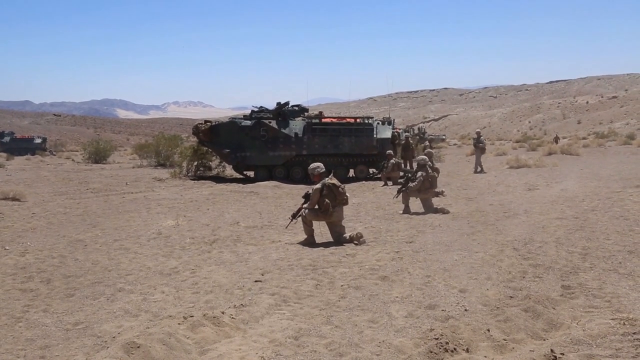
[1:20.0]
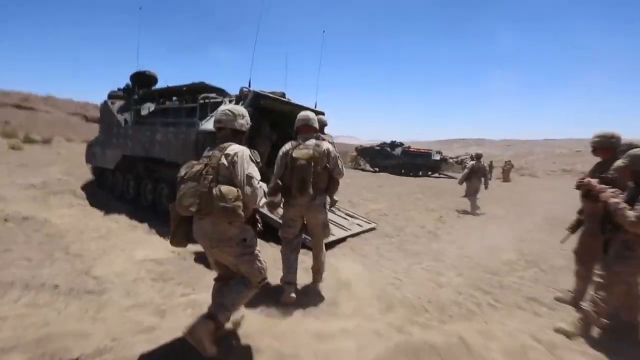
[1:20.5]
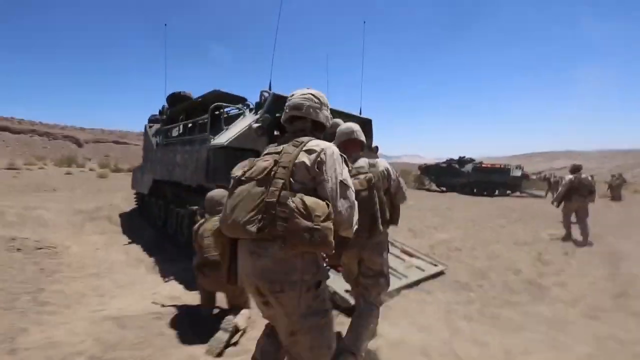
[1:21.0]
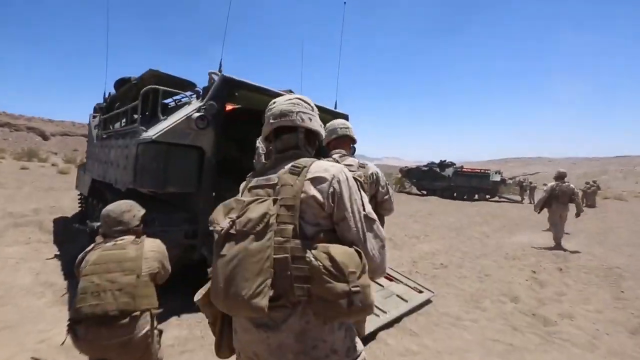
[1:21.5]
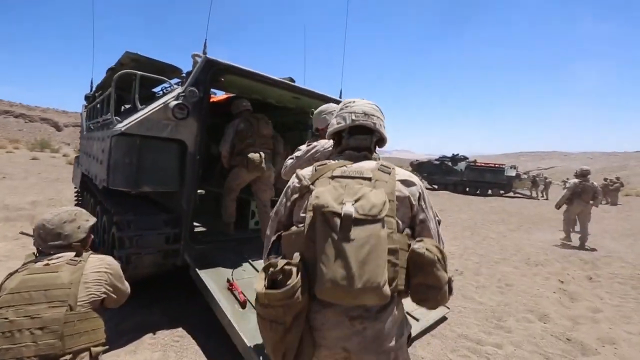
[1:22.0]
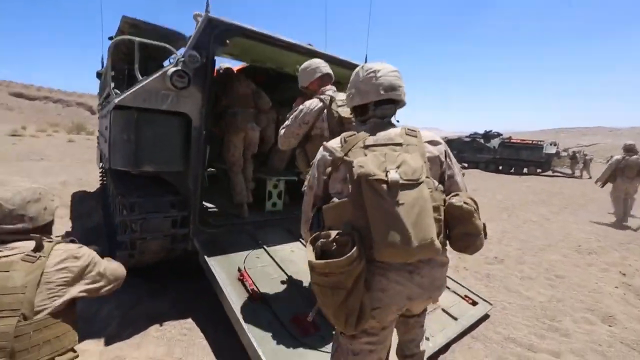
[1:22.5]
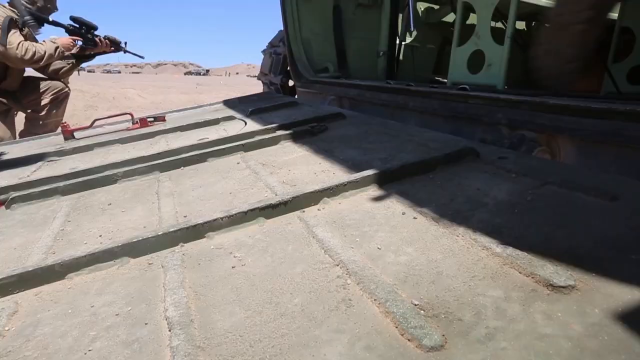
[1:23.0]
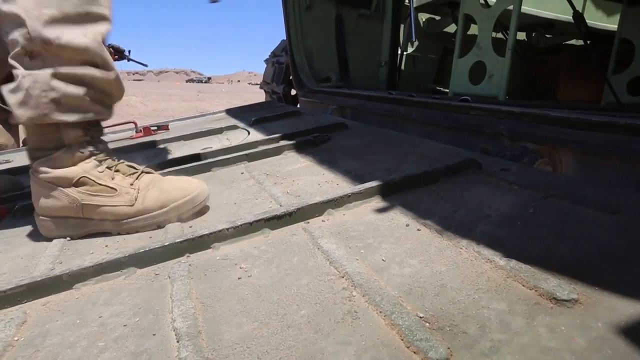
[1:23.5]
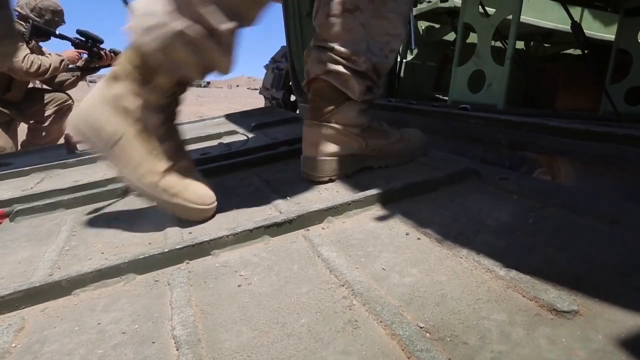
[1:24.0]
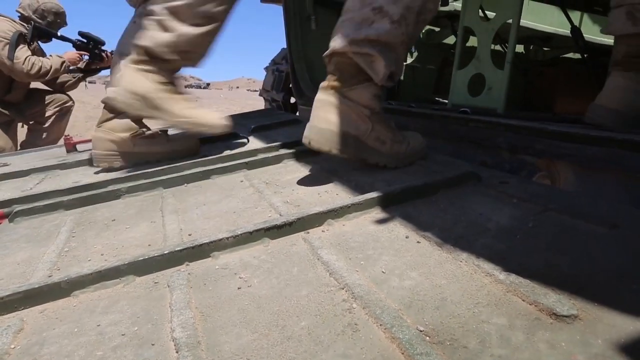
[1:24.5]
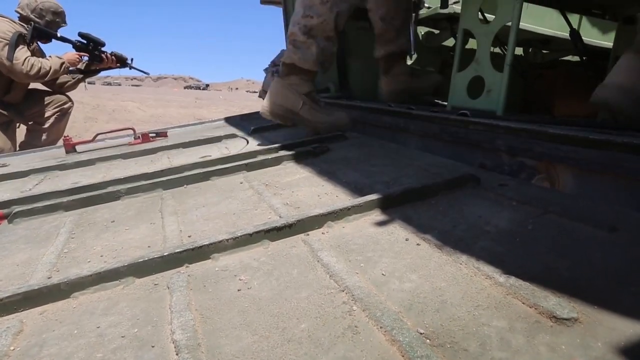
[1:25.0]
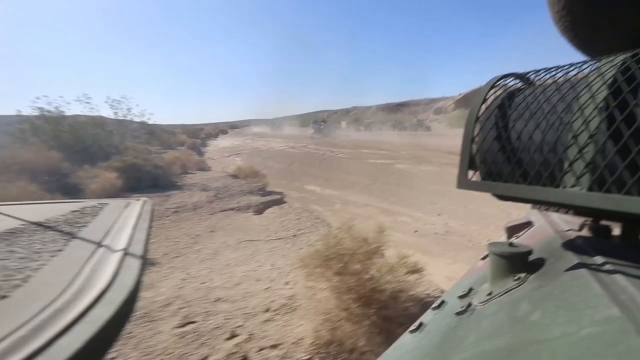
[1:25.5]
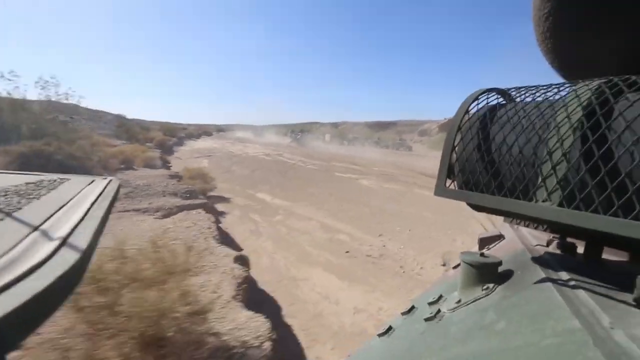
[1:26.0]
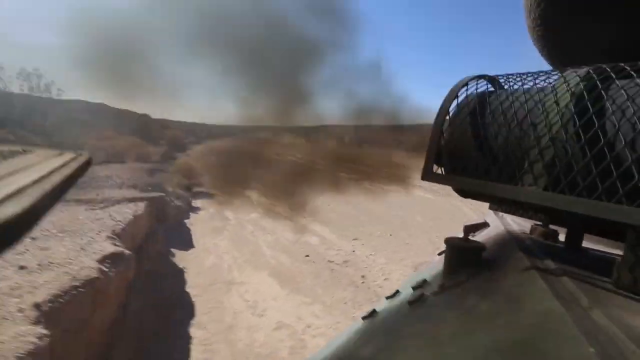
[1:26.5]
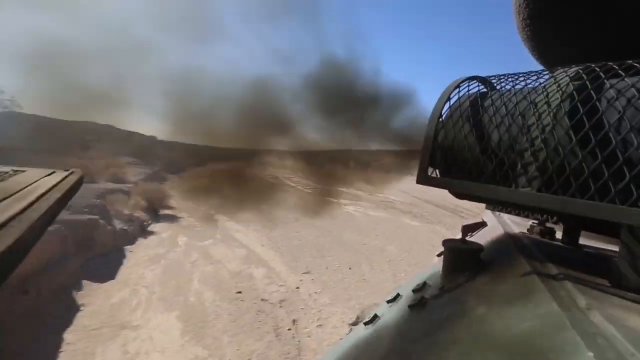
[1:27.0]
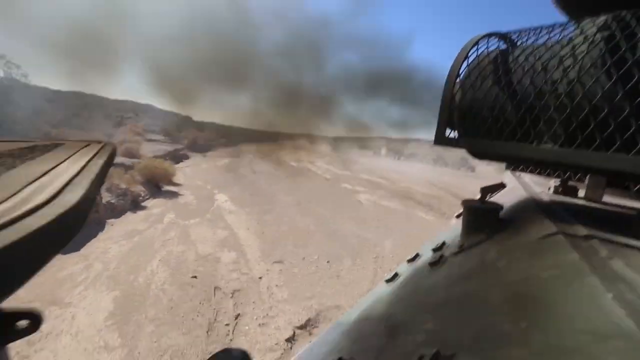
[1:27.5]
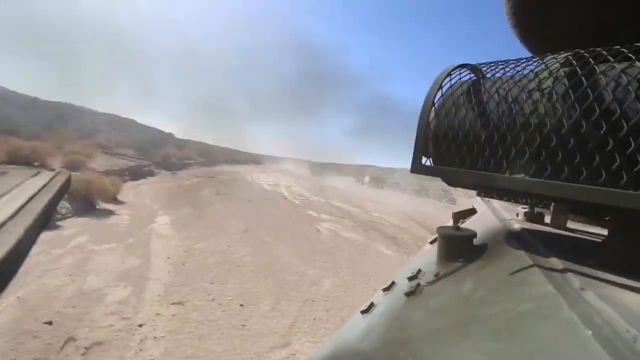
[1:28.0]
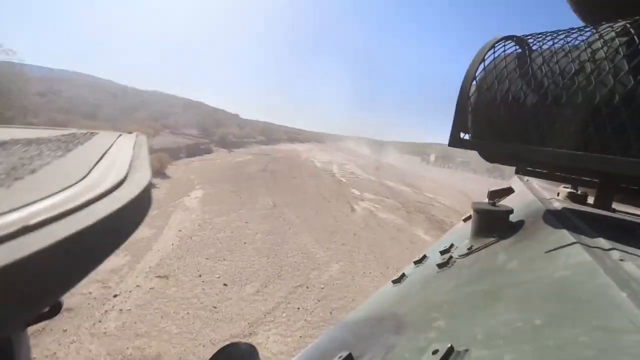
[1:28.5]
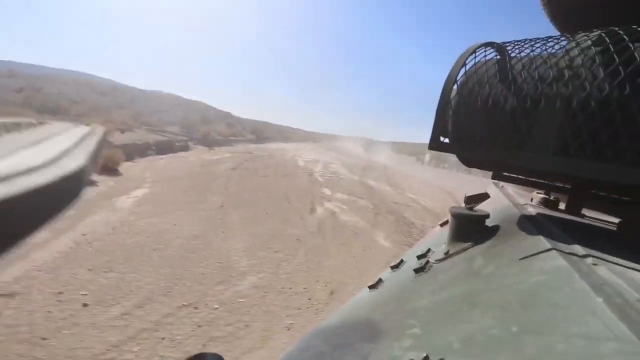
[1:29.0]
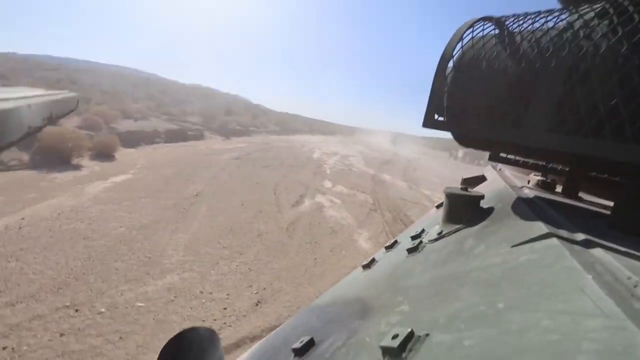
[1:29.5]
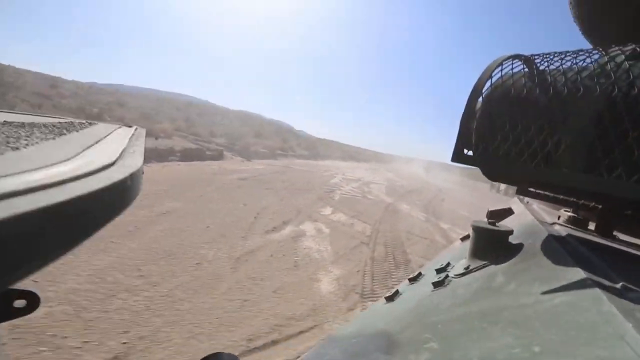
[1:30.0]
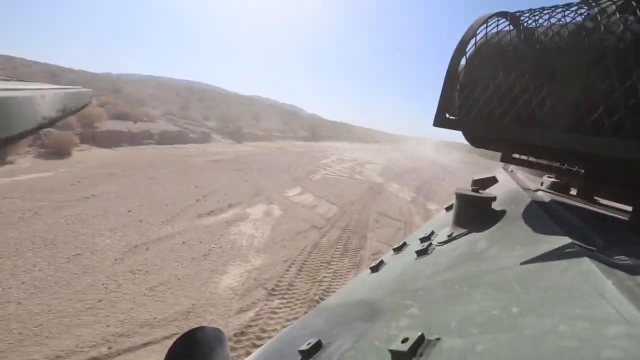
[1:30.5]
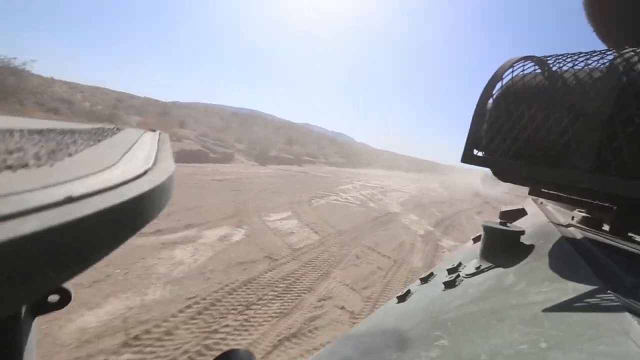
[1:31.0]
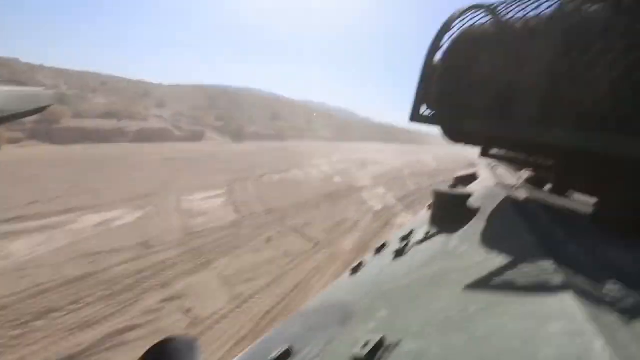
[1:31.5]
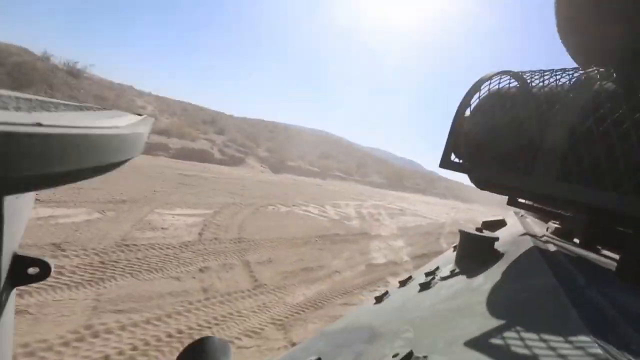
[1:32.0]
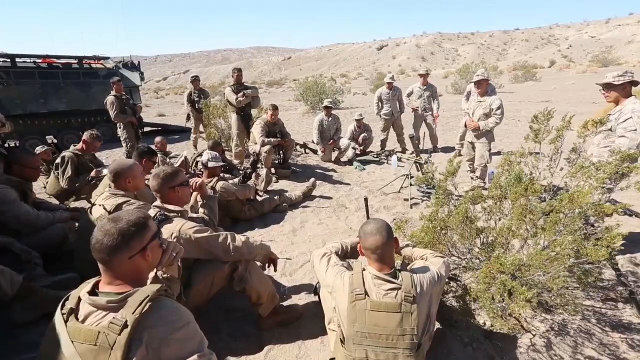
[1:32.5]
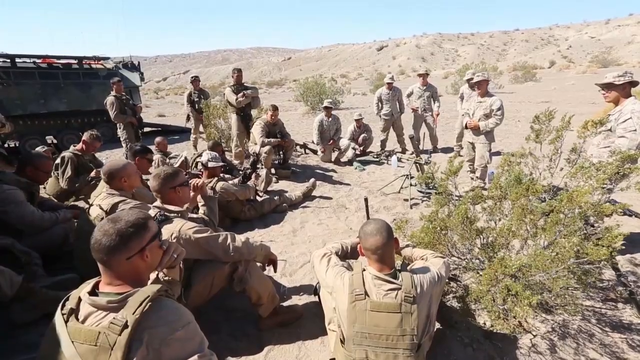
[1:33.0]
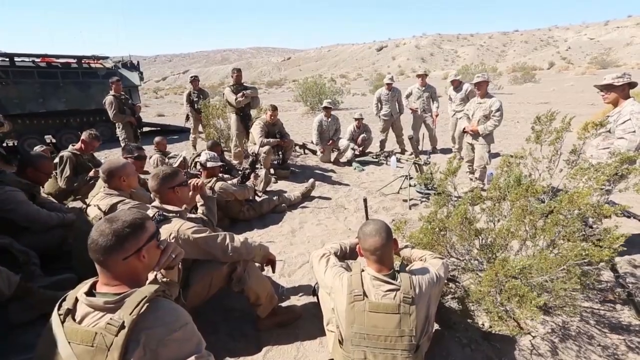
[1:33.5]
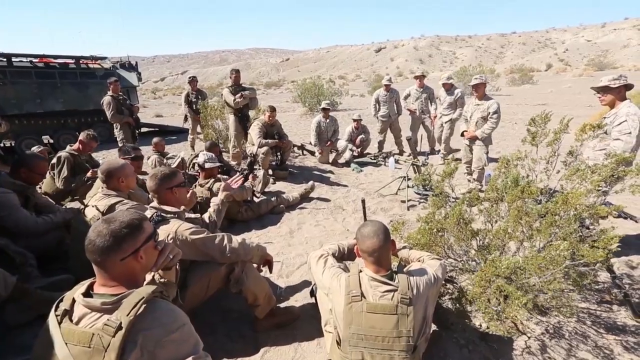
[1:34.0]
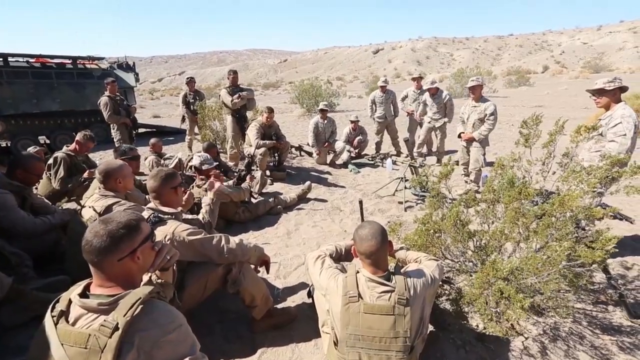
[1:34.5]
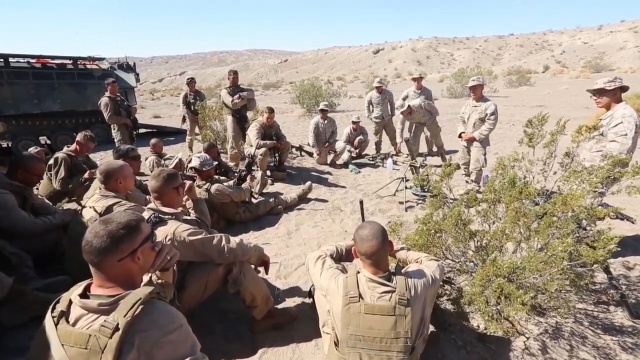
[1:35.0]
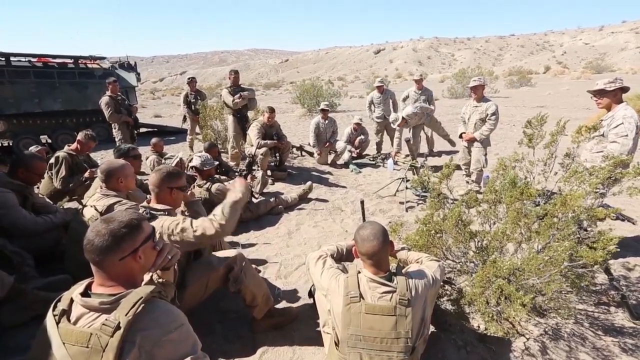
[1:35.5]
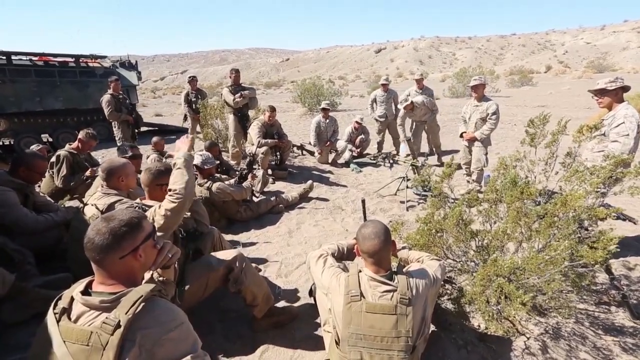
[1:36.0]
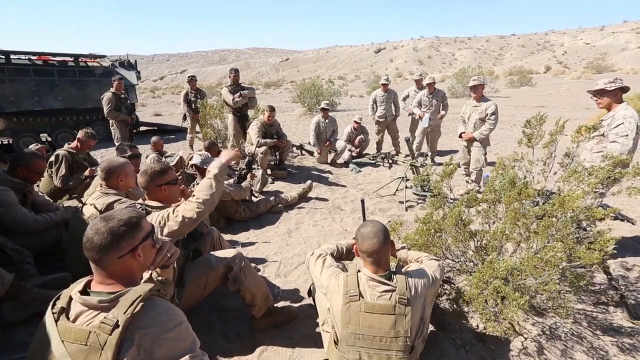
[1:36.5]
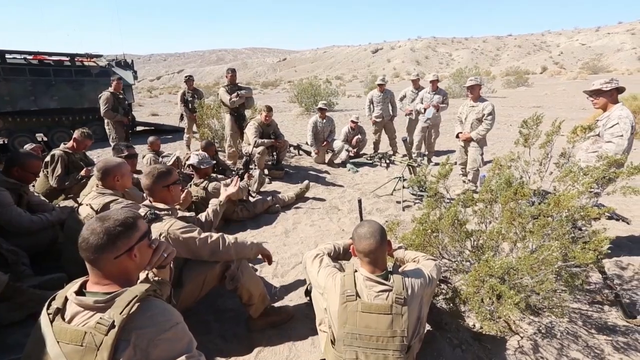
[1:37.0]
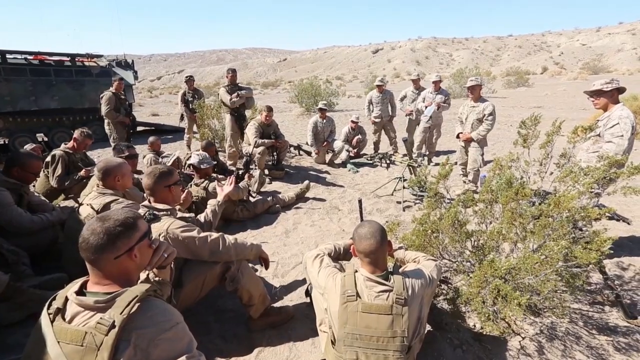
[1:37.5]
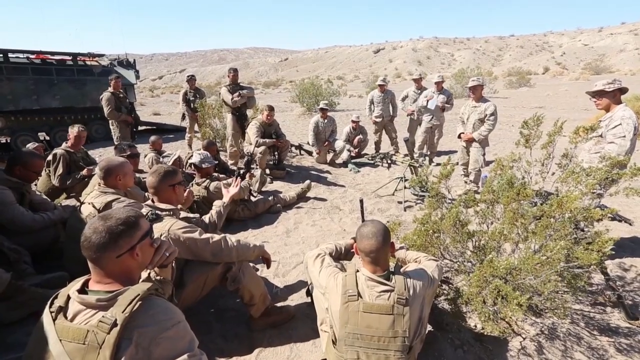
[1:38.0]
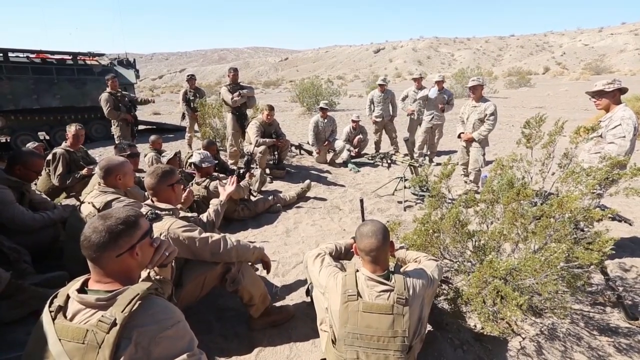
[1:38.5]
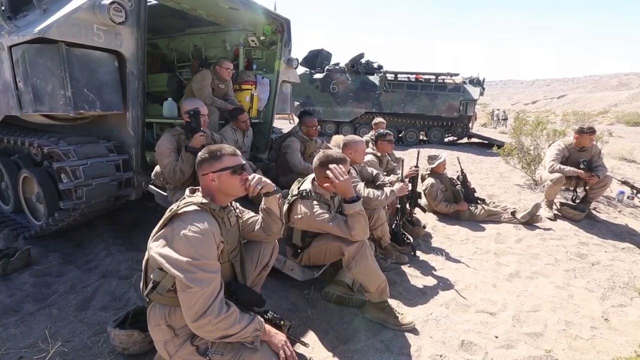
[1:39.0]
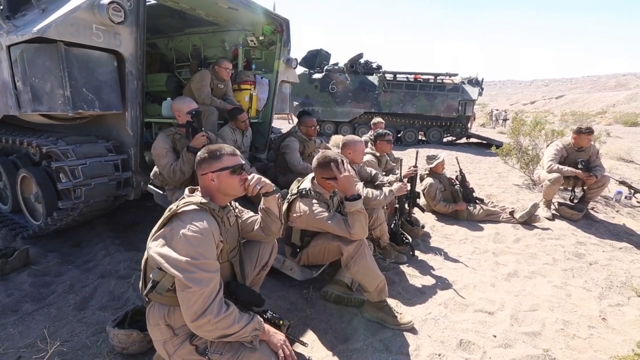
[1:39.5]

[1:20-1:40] What looks like a group of soldiers, possibly performing a drill, run away from the camera toward a large truck or tank. A sort of drop-down ramp comes out of the bottom of the tank; they all seem to run toward it and then walk into the back of the tank. The video cuts to footage that looks like it is shot from the back end of a tank, showing fumes coming from the back of the tank and the desert dirt and sand being driven over. The camera is quite shaky. It then cuts to what looks like the soldiers having some kind of meeting in the desert. They are in what looks like a circle, some sitting on the ground and some standing around, and one soldier in particular appears to be addressing everyone else. He stands toward the upper right of the image while everyone else looks at him. A soldier in the bottom left sort of gestures with his left hand toward the speaking man, as if asking a question.